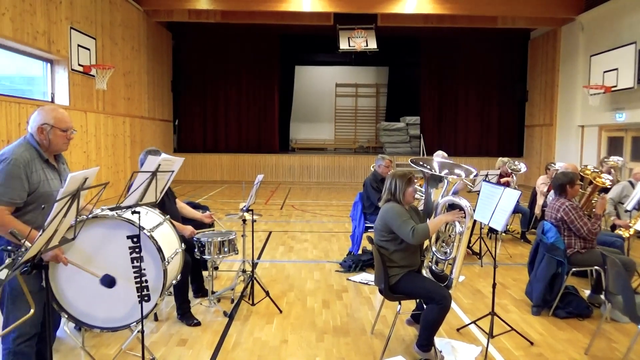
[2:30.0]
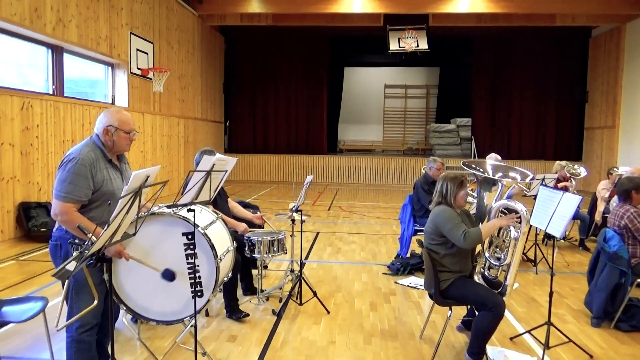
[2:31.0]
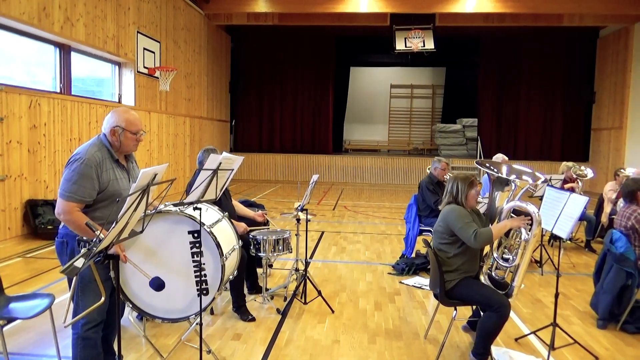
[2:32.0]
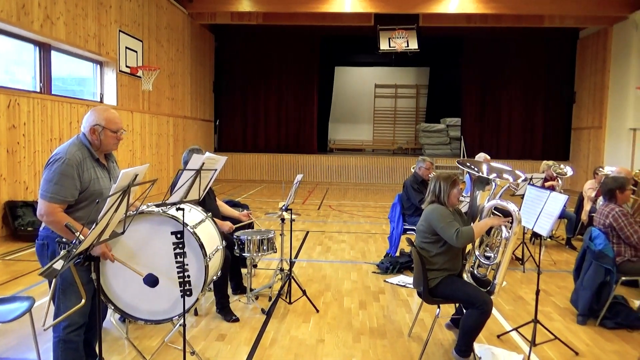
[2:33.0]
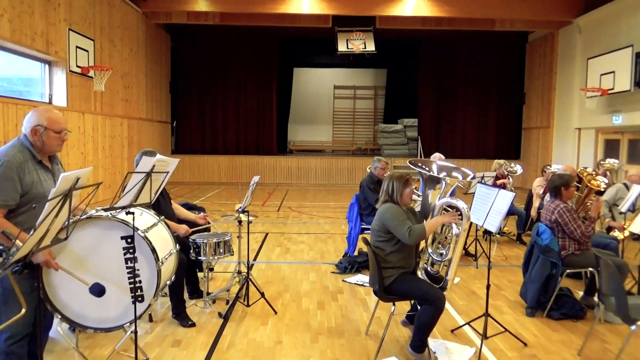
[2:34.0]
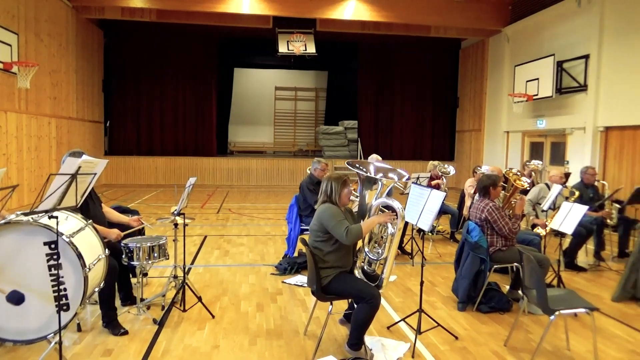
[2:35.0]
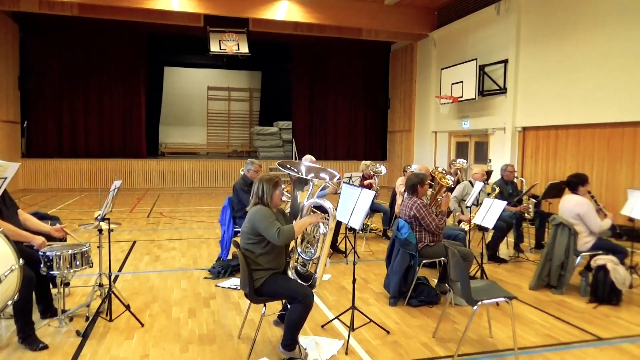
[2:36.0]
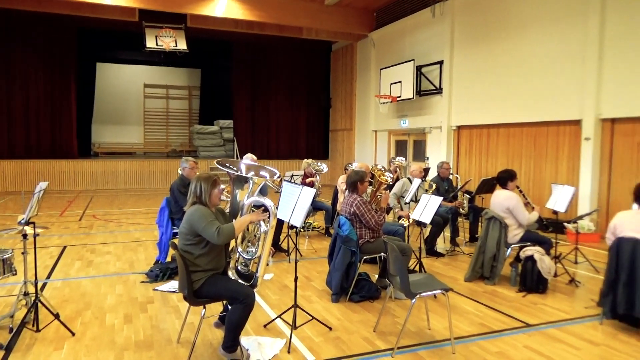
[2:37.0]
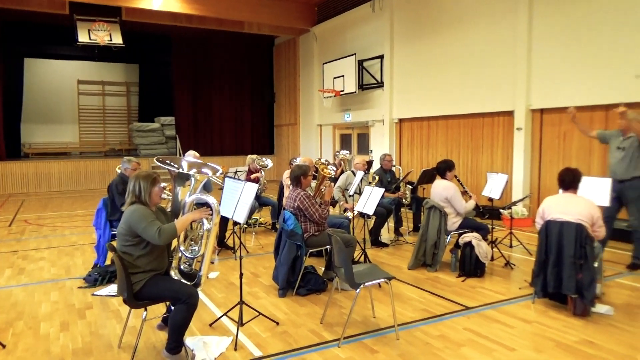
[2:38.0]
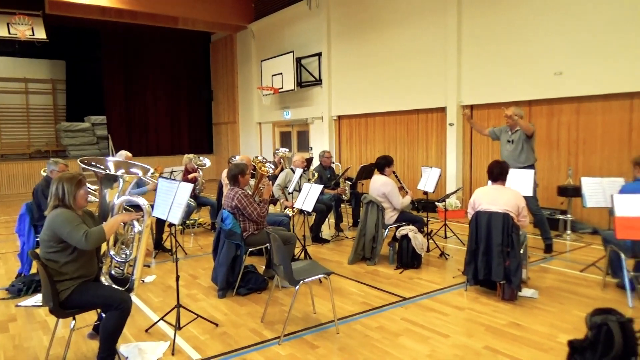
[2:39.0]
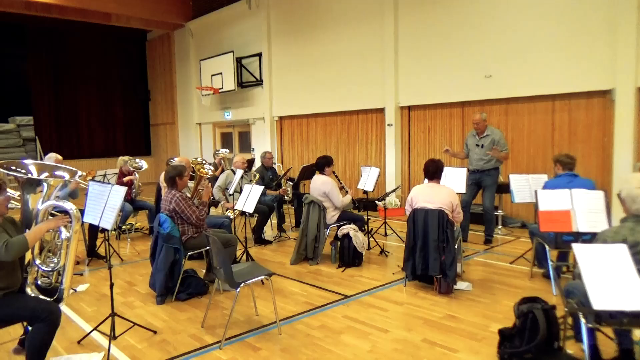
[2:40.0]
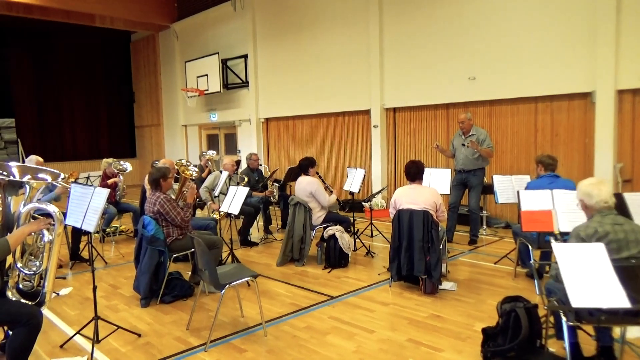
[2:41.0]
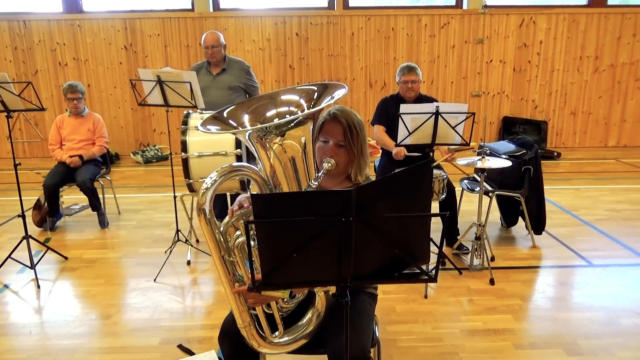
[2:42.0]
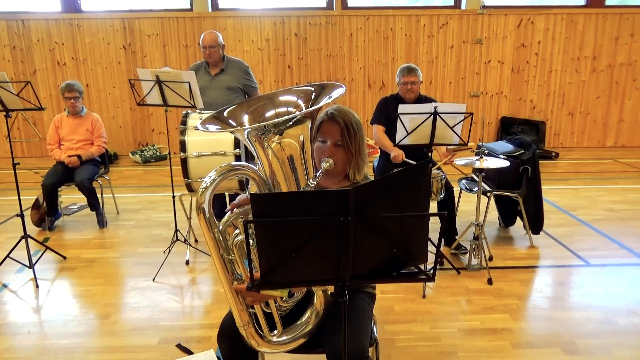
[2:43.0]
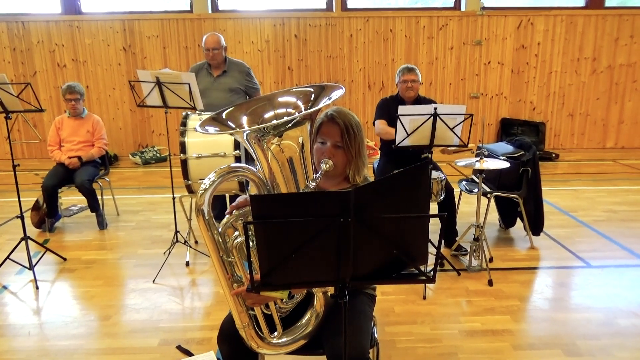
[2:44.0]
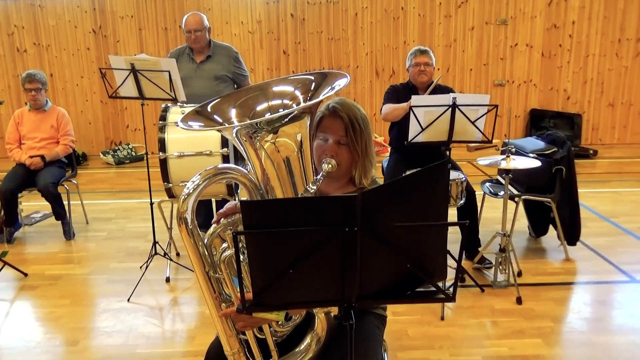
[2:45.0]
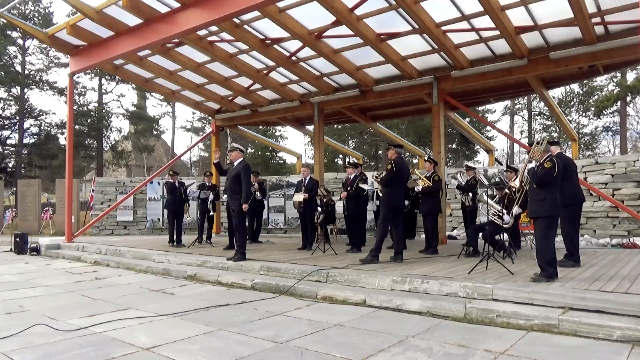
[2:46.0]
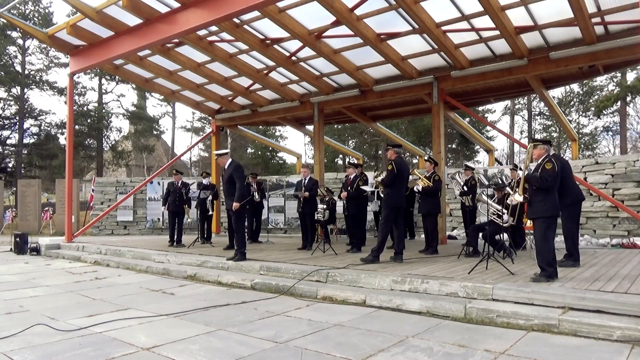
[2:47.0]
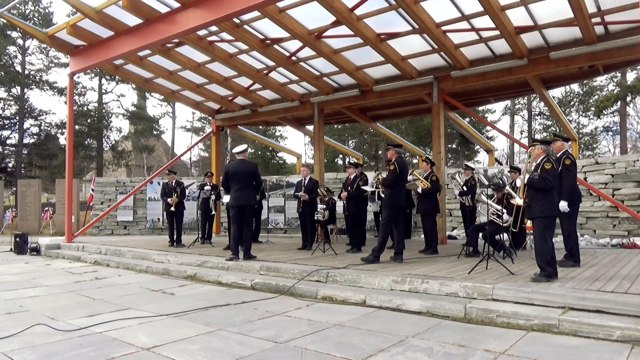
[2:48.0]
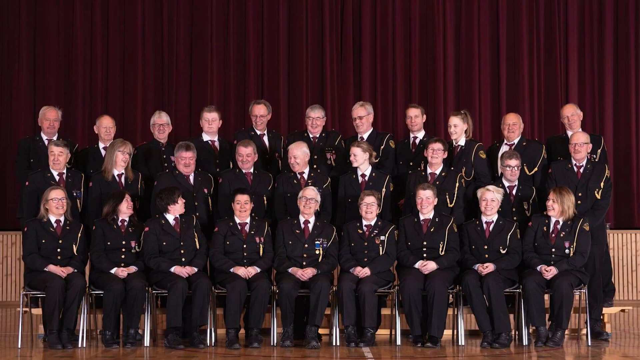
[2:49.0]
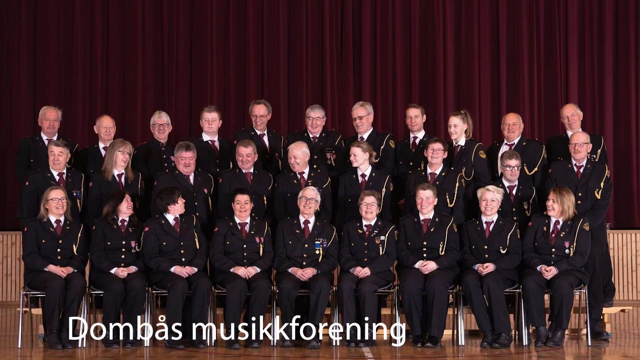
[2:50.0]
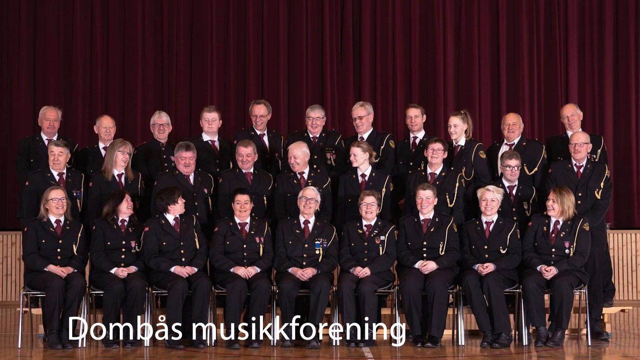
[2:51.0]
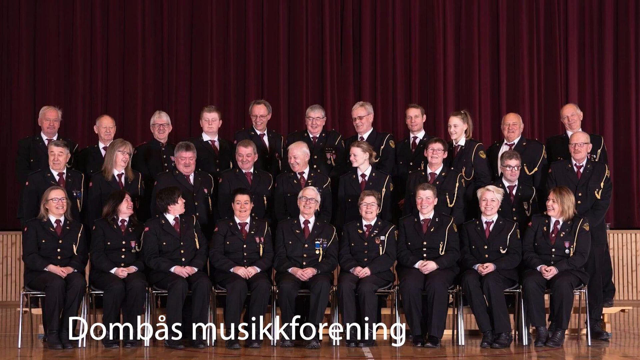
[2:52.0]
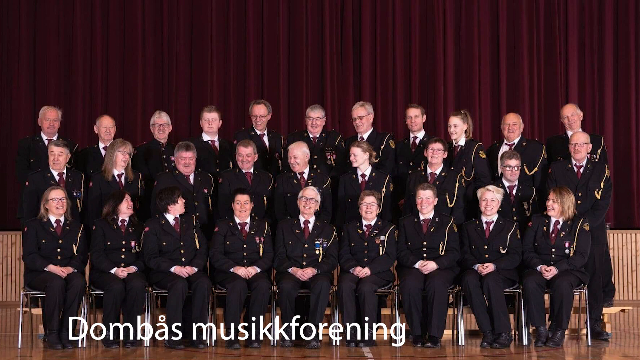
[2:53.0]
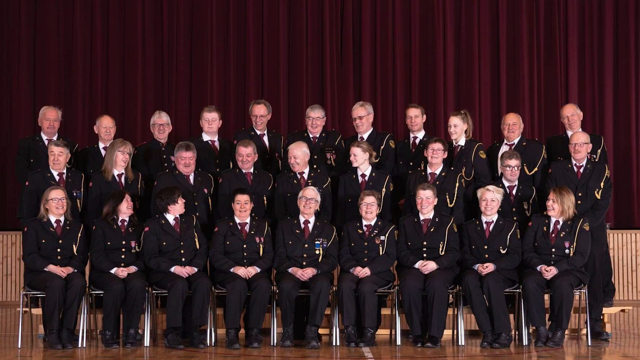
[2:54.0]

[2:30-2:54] In a basketball court with brown wood-paneled walls and basketball nets on the walls, many people sit in chairs playing brass instruments on the right, while on the left a percussion group plays percussion instruments and drums. The video pans left to show more of the percussion group, then pans right to show the rest of the orchestra. The conductor waves his arms in the front. The video cuts to a frontal view of a woman playing a large brass instrument while looking at sheet music, with the conductor behind her; she looks up at the camera. The video cuts to many people standing in black uniforms playing instruments. It then cuts to three rows of people: the first row sits, the second row is behind them, and the third row is behind the second. They all wear black uniforms and are in front of a dark red velvet curtain.